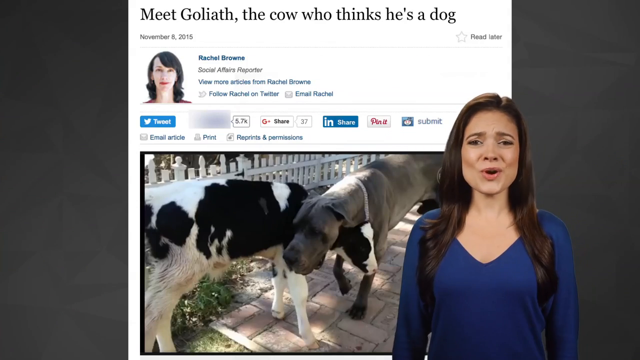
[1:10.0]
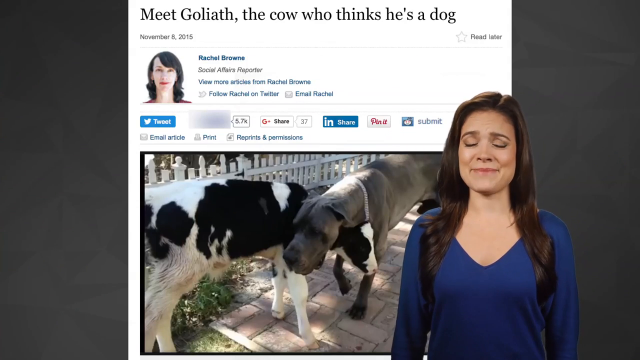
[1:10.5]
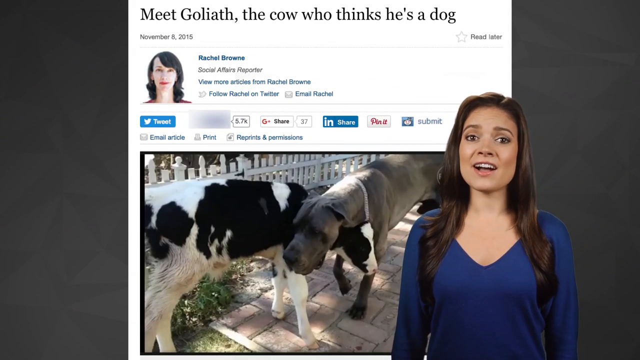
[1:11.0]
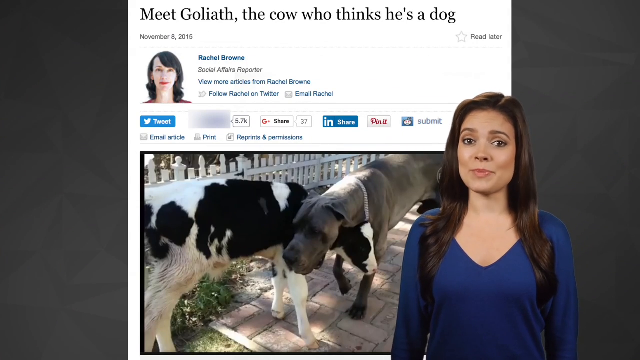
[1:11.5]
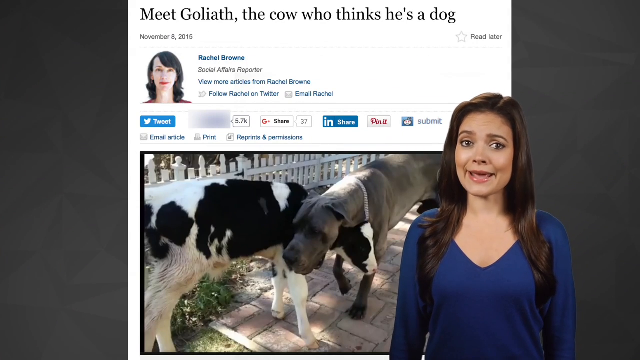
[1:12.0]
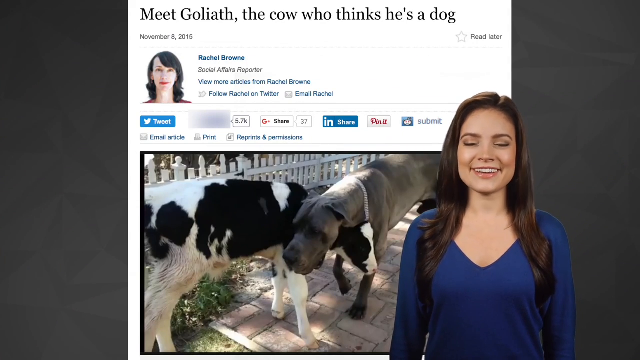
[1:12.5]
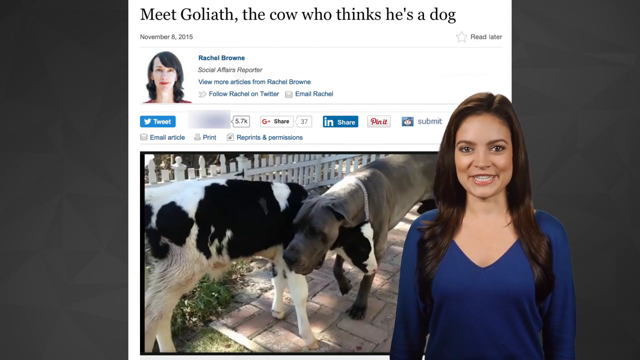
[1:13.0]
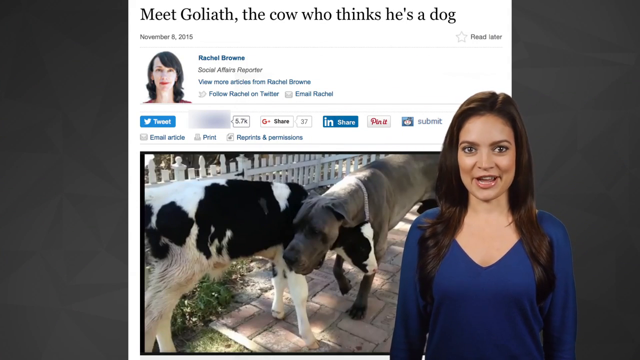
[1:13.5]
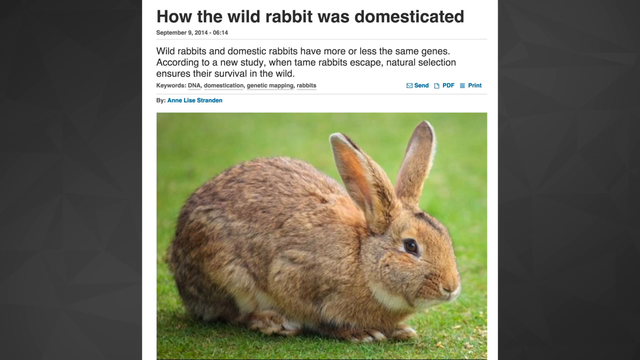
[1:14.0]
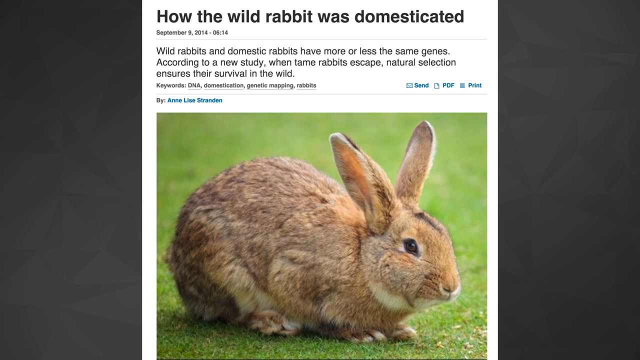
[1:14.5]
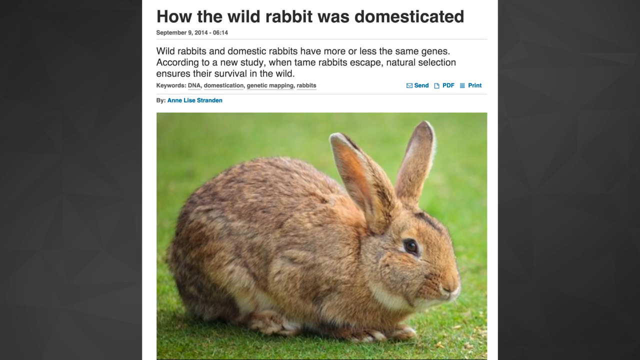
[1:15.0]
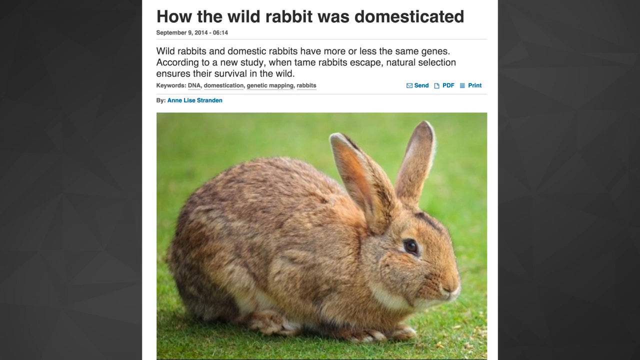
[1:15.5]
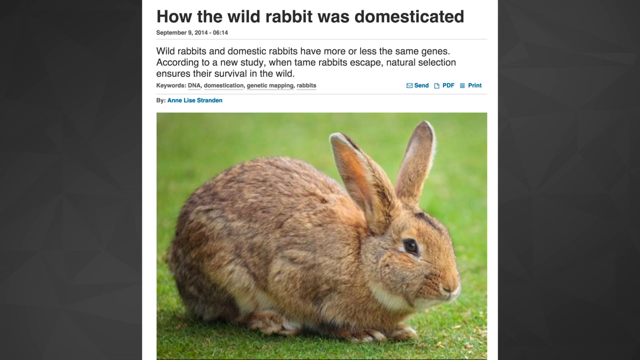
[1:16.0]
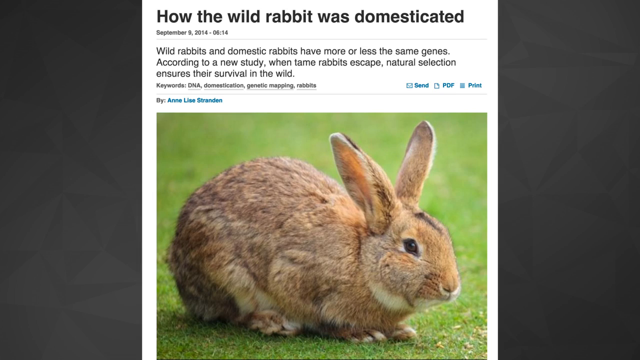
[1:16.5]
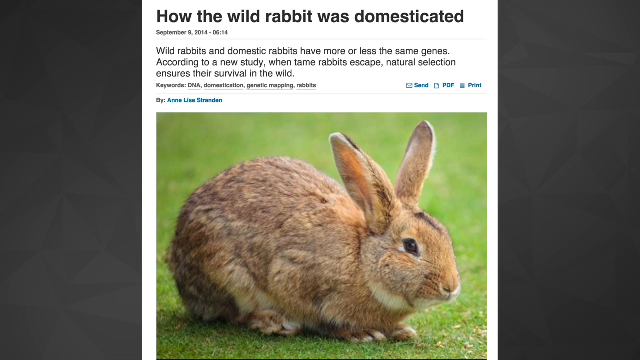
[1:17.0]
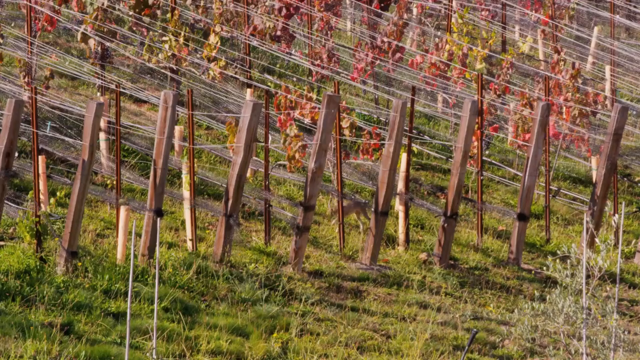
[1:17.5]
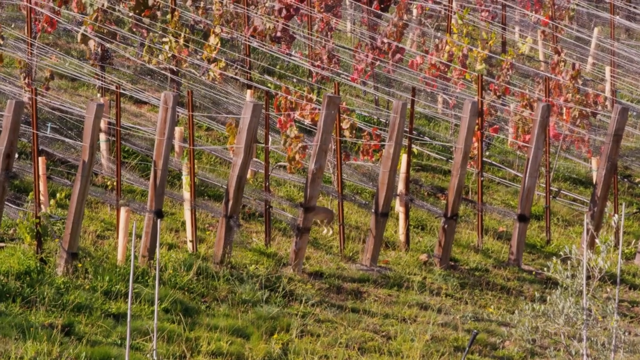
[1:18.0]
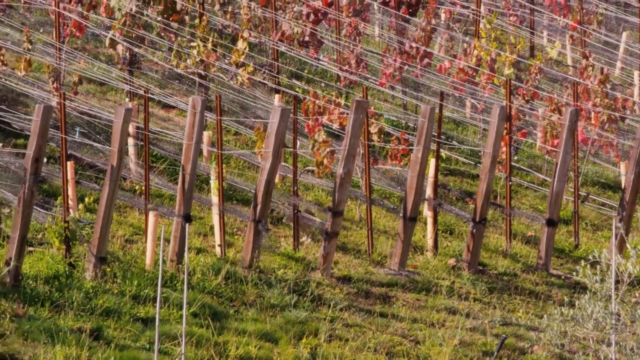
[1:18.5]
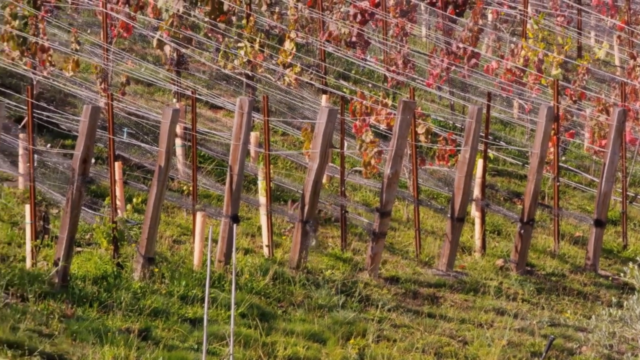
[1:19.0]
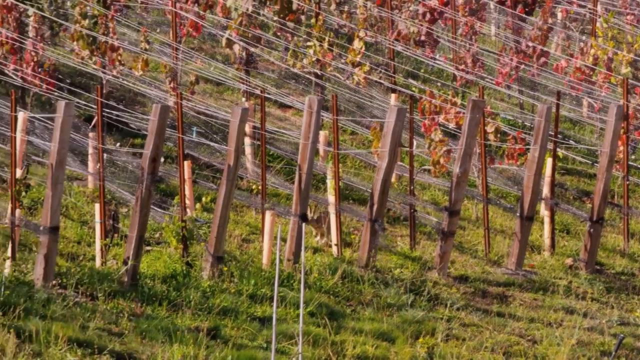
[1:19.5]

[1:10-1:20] The video cutout of the lady talking appears with another website screenshot behind it, titled "Meet Goliath, the cow who thinks he's a dog". Underneath, a dog and a cow stand beside each other, almost as if hugging; they are the same size, as the dog is quite big and the cow looks young. The lady then disappears, and another website screenshot appears, titled "how the wild rabbit was domesticated", with a picture of a rabbit underneath. Then comes a shot of a vineyard, where a rabbit hops on the grass underneath the vines.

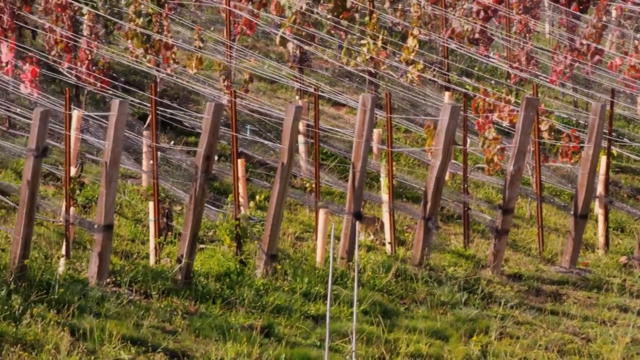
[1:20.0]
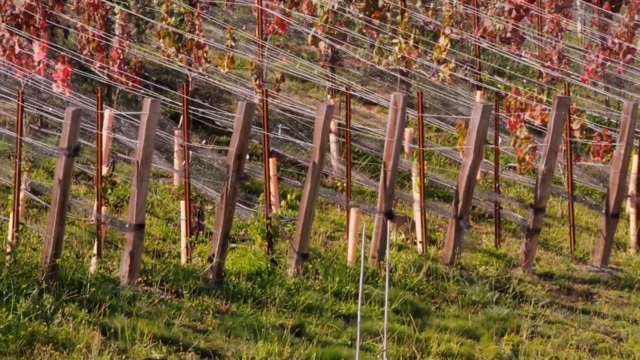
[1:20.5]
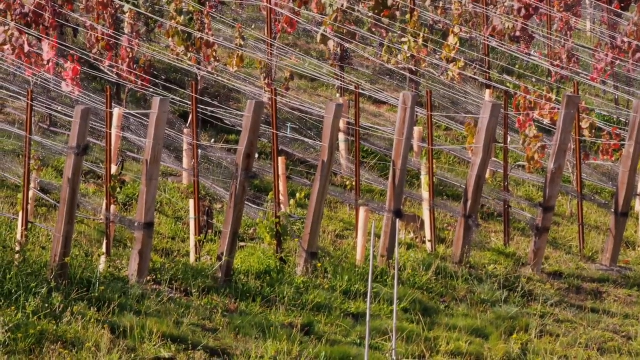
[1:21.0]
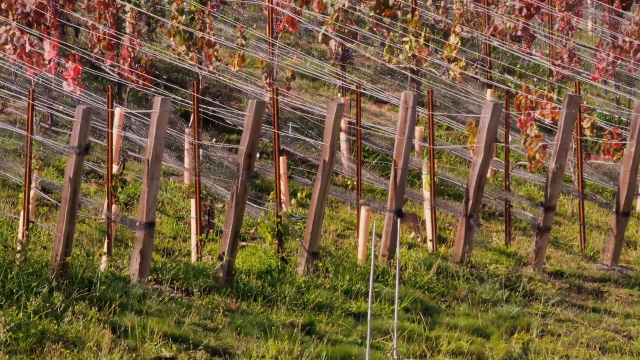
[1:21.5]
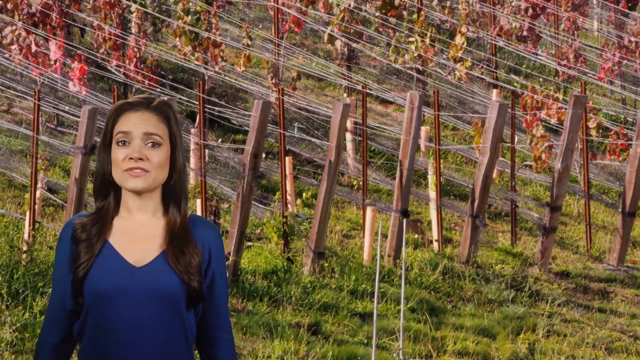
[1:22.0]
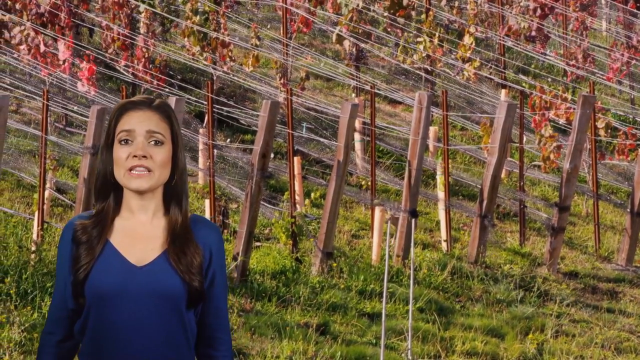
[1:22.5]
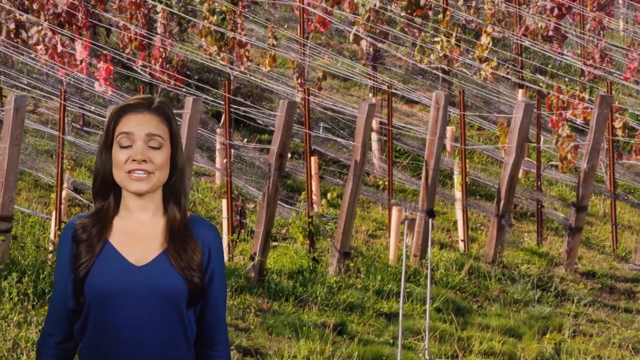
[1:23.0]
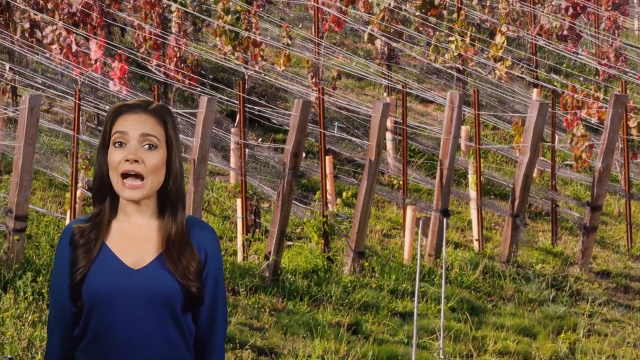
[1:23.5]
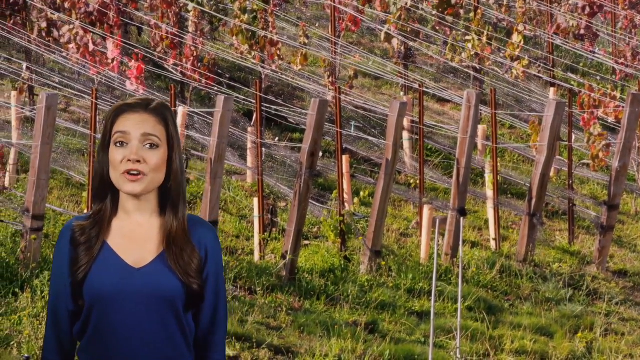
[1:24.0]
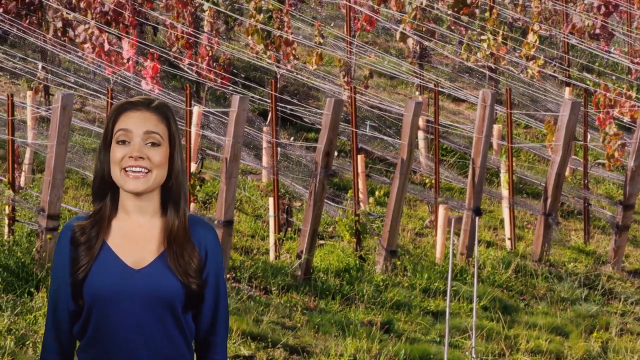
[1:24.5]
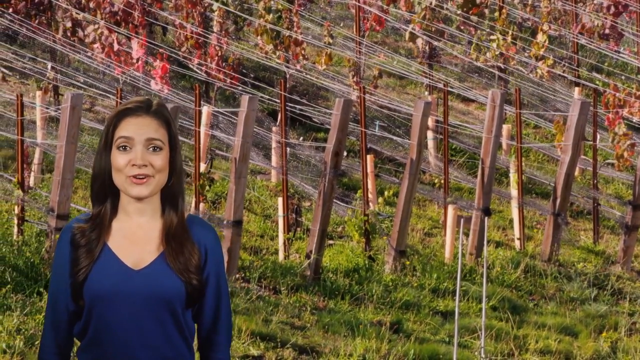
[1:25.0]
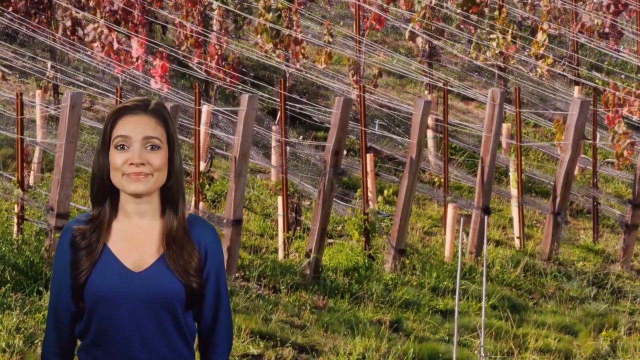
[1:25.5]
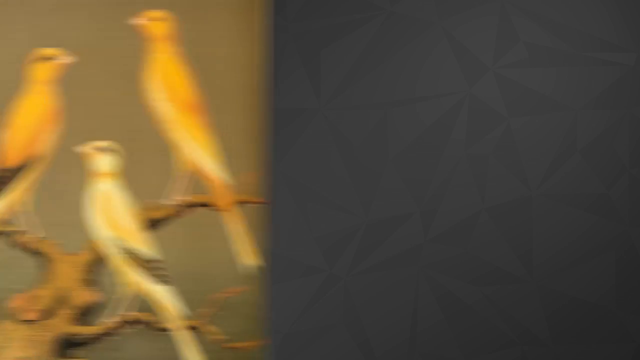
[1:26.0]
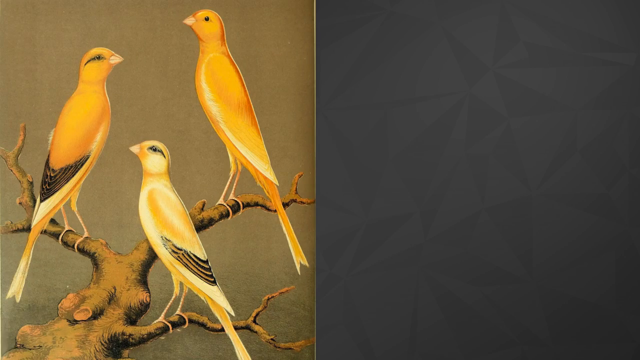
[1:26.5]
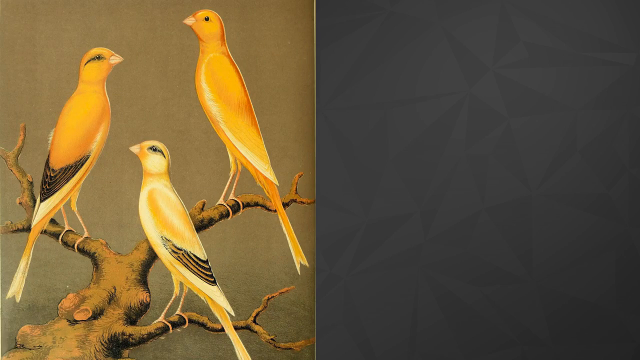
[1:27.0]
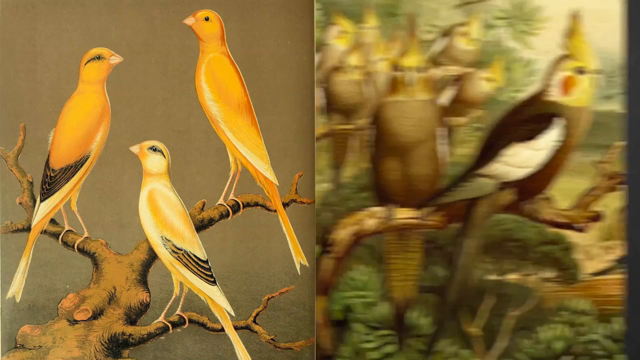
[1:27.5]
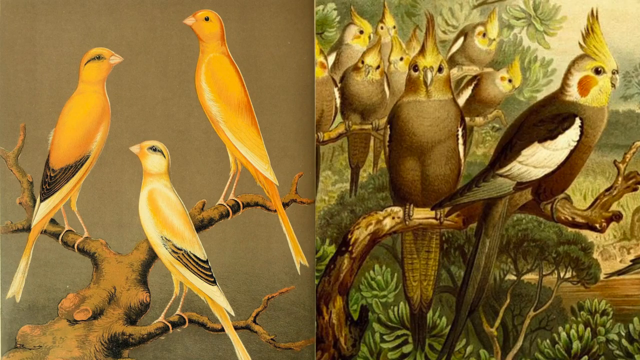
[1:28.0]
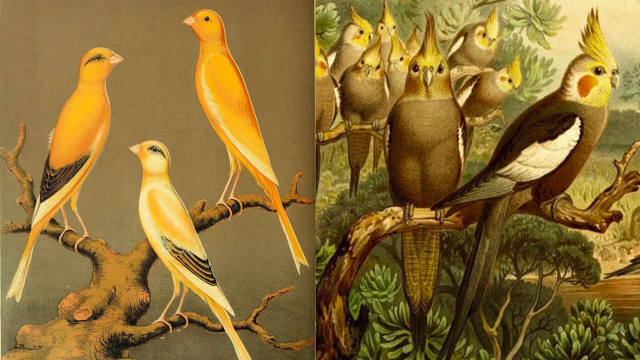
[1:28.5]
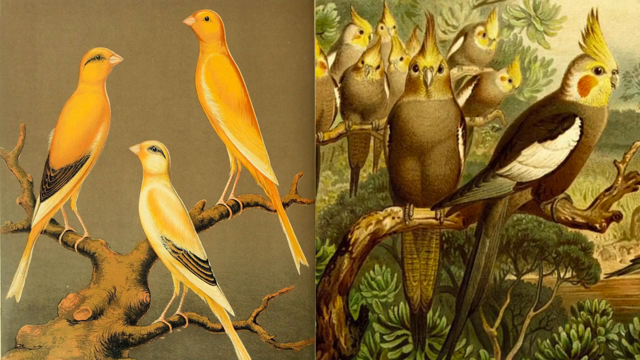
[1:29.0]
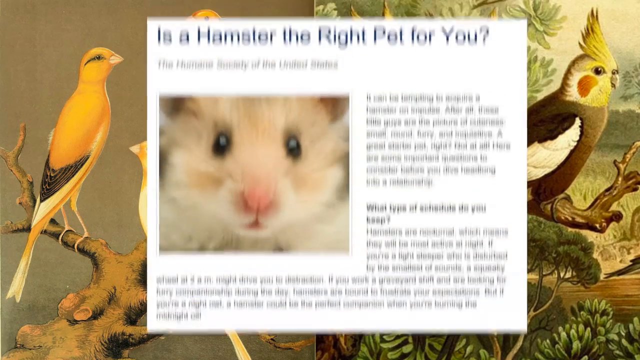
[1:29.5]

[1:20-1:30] The rabbit moves underneath the vines. The screen then splits into two parts, with a different picture on the left and on the right. One is a painting of a tree branch with three orange birds perched on it; the other is a painting of multiple parrots perched on a tree branch as well. Another picture appears on top of the two: a screenshot from another website that reads "Is a hamster the right pet for you?", with the source being the Humane Society of the United States.